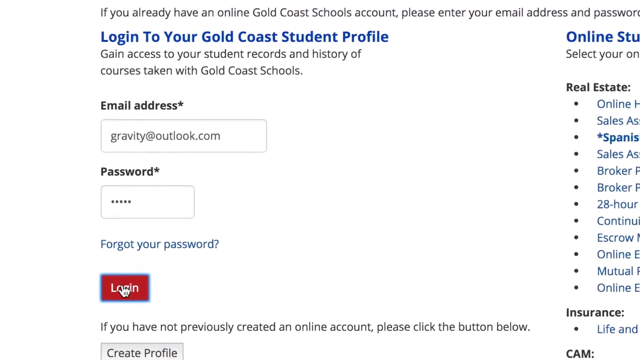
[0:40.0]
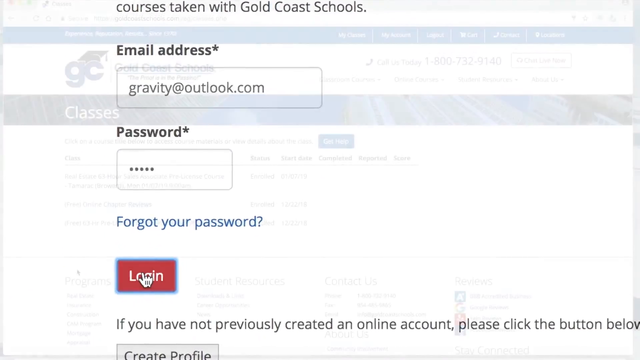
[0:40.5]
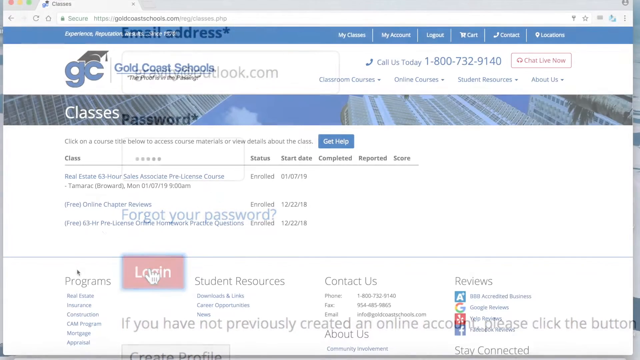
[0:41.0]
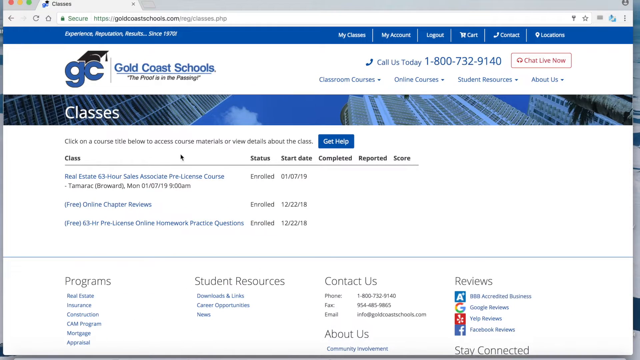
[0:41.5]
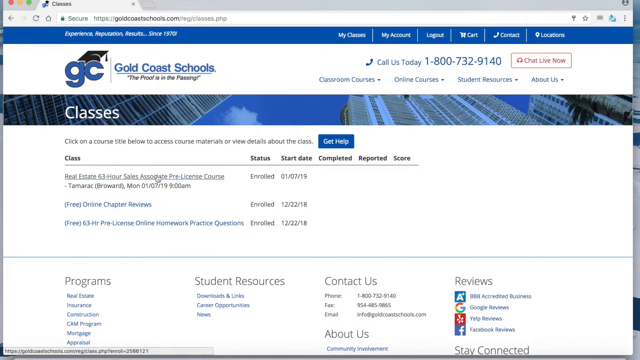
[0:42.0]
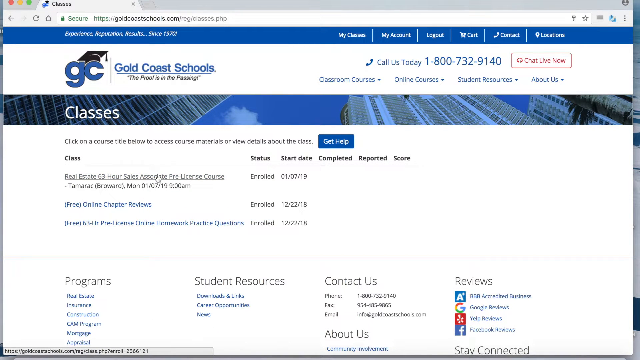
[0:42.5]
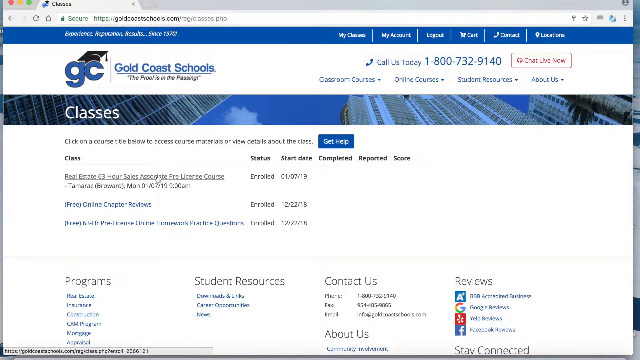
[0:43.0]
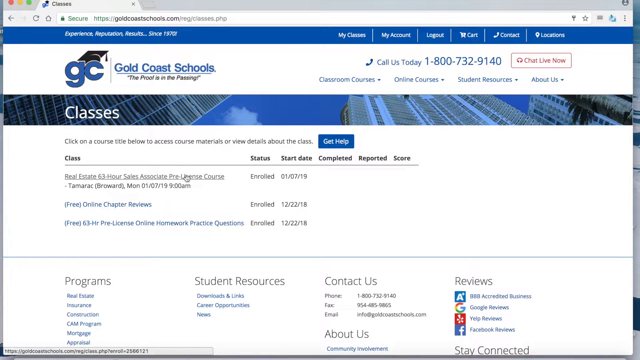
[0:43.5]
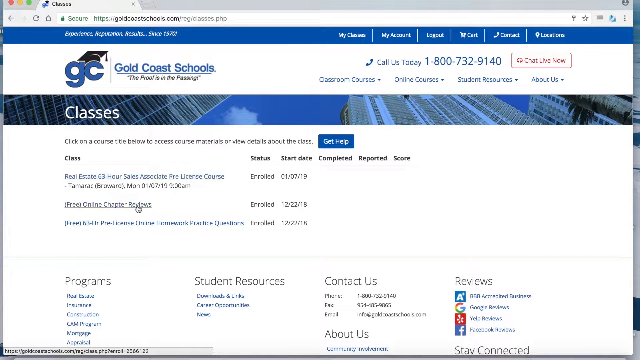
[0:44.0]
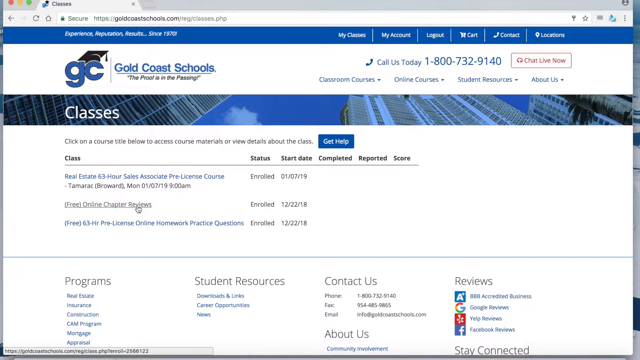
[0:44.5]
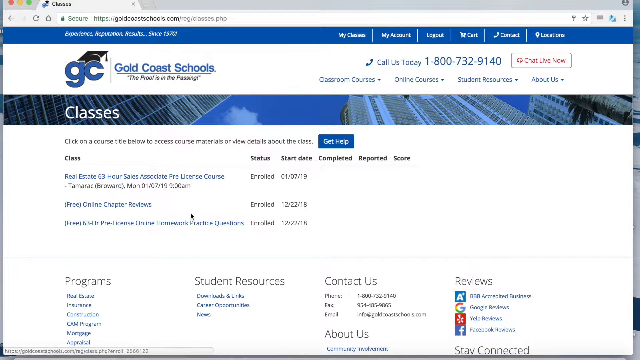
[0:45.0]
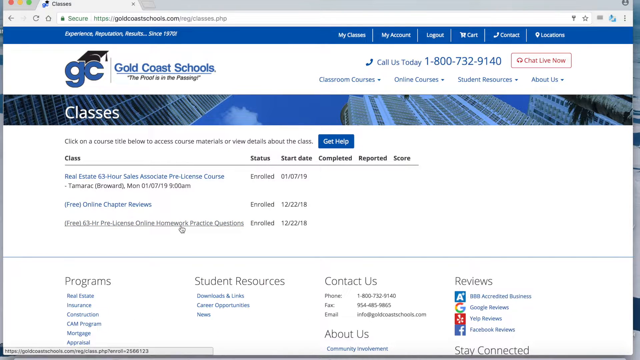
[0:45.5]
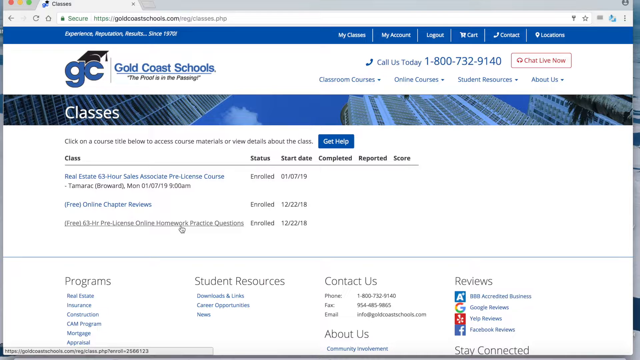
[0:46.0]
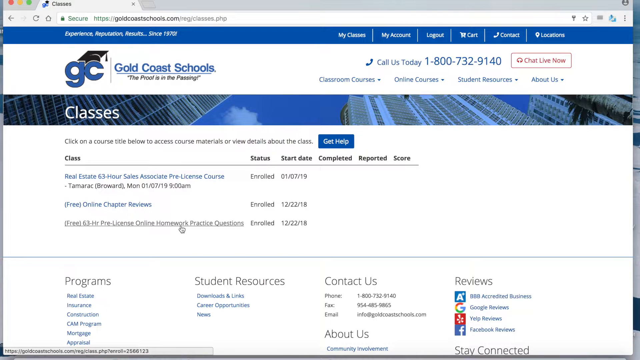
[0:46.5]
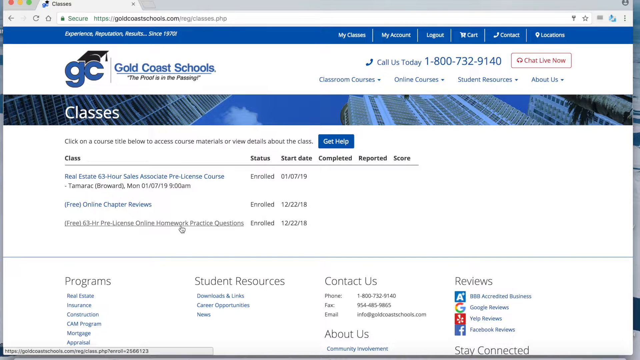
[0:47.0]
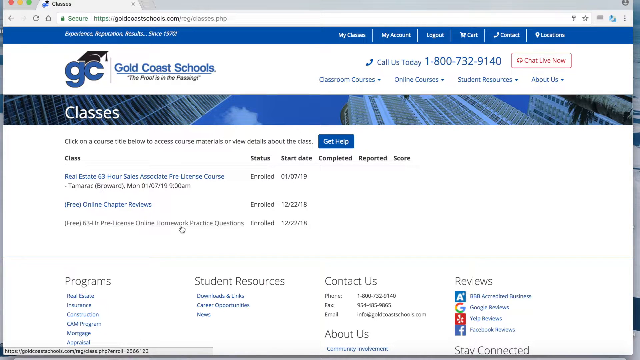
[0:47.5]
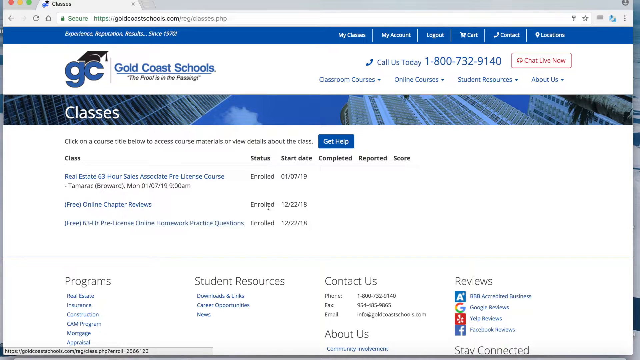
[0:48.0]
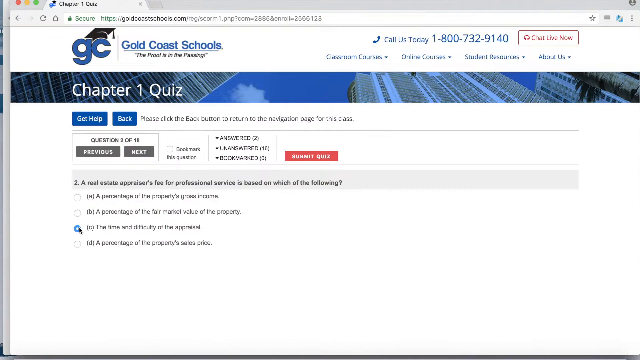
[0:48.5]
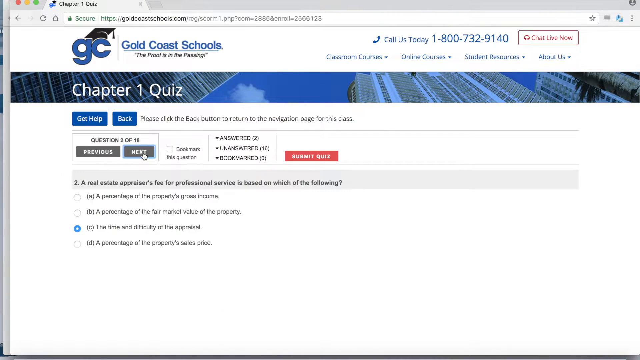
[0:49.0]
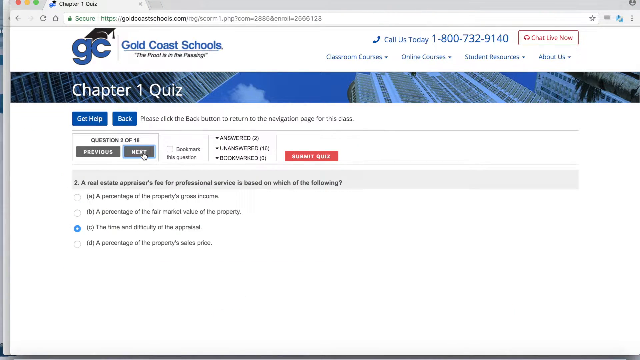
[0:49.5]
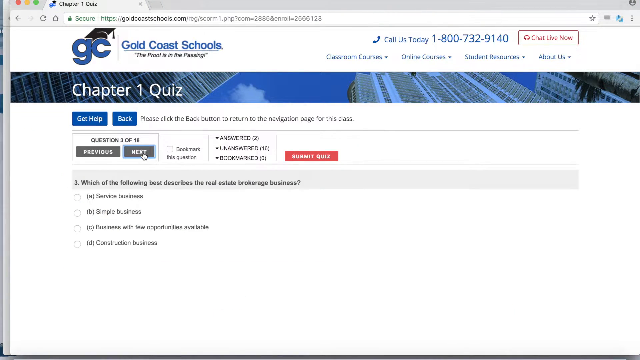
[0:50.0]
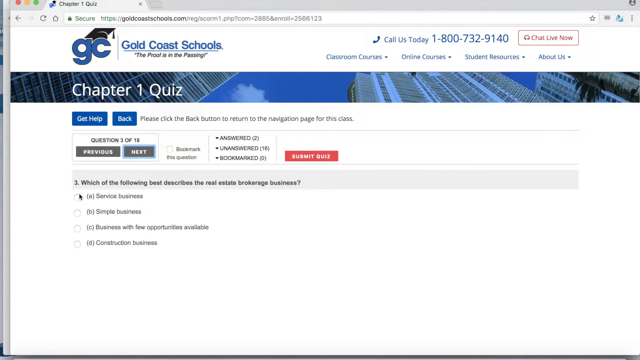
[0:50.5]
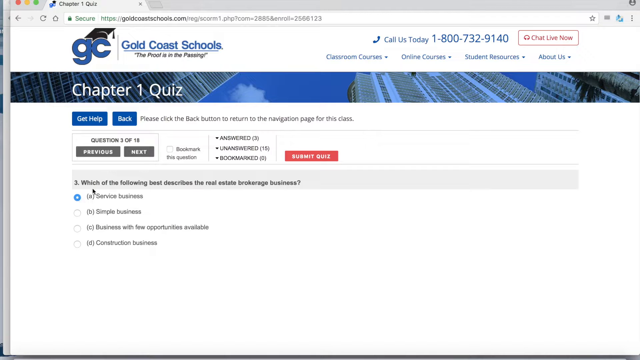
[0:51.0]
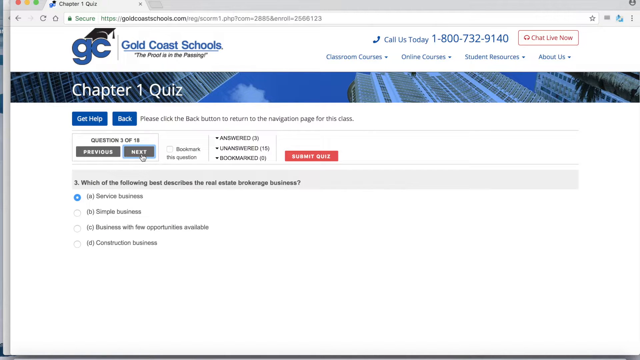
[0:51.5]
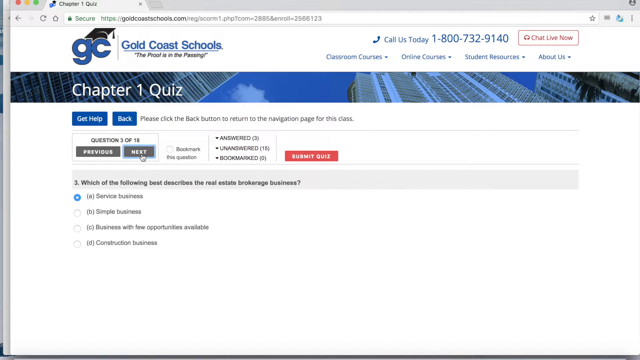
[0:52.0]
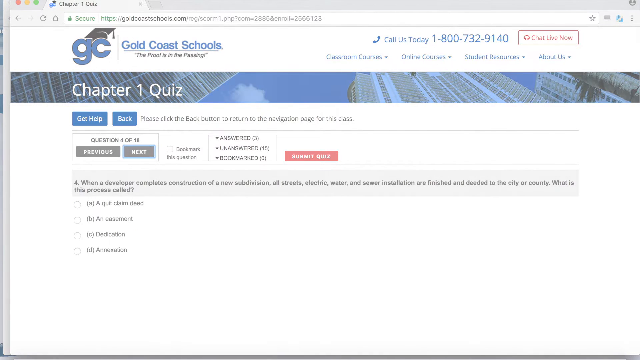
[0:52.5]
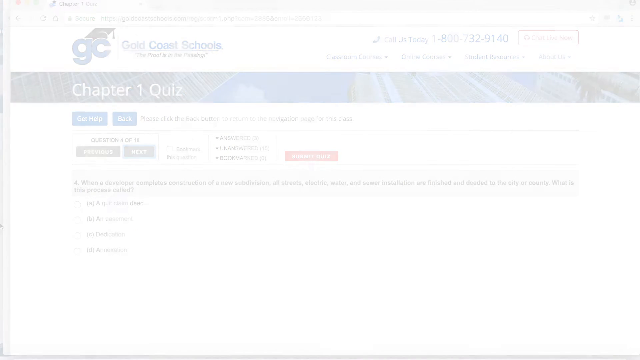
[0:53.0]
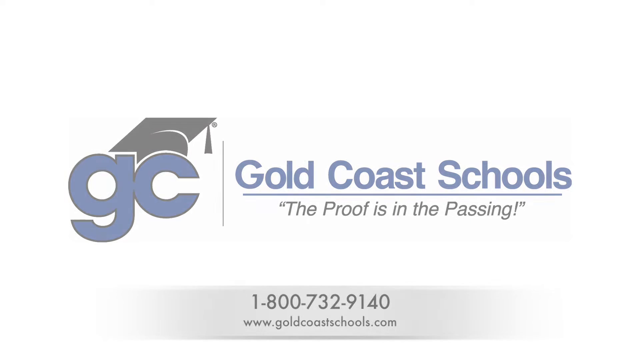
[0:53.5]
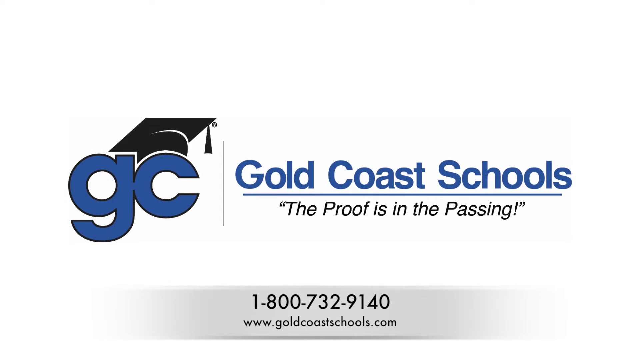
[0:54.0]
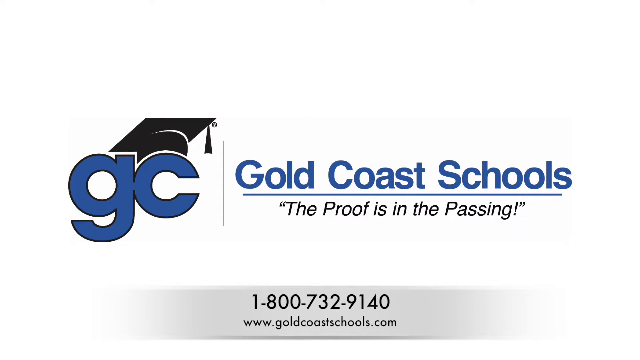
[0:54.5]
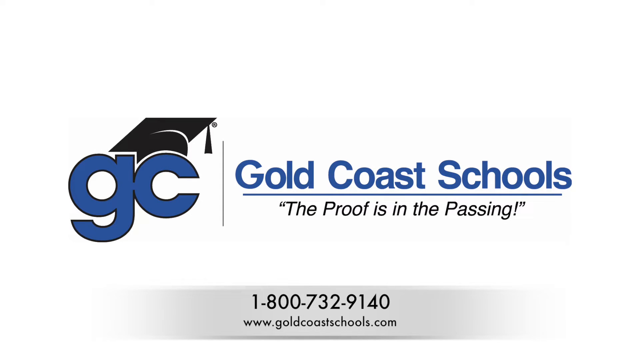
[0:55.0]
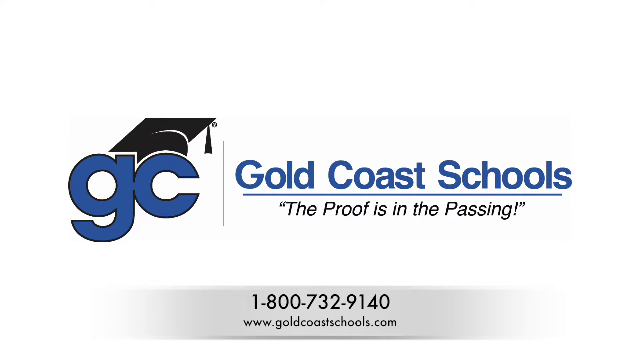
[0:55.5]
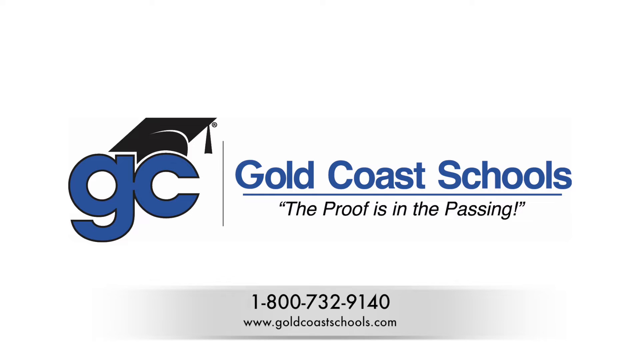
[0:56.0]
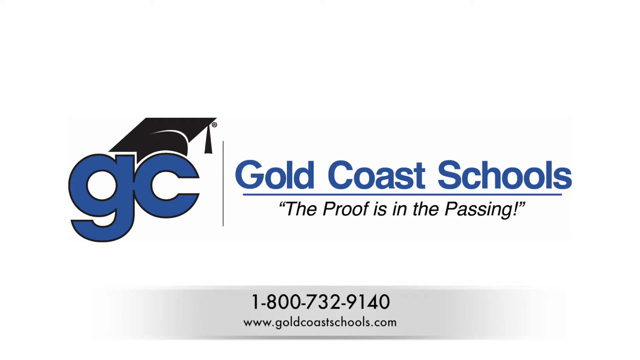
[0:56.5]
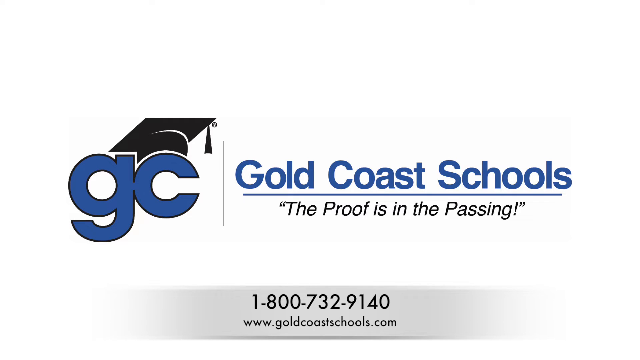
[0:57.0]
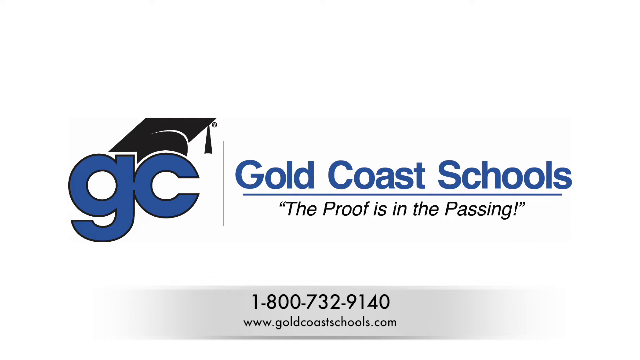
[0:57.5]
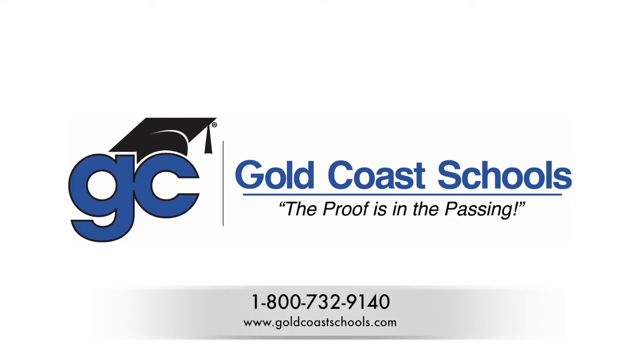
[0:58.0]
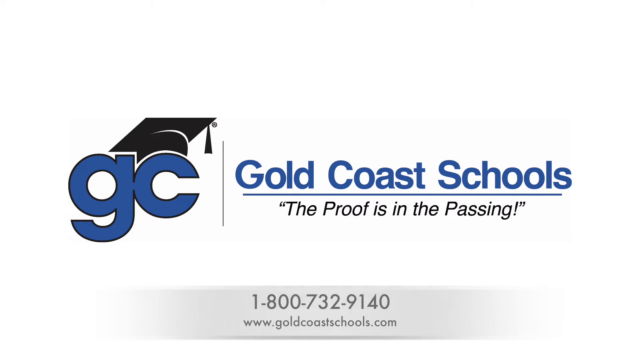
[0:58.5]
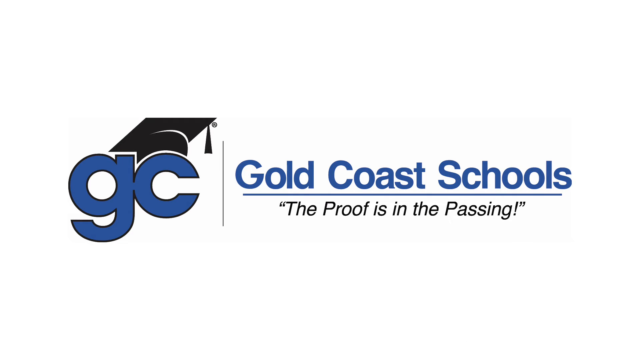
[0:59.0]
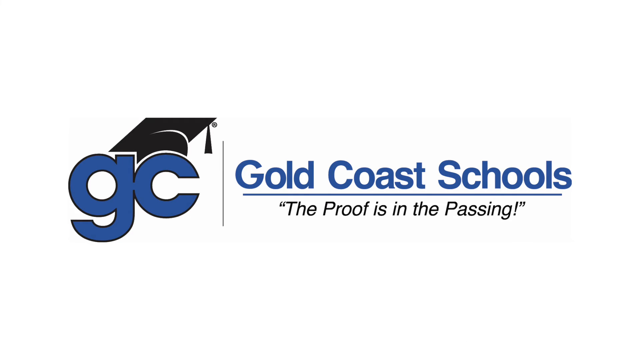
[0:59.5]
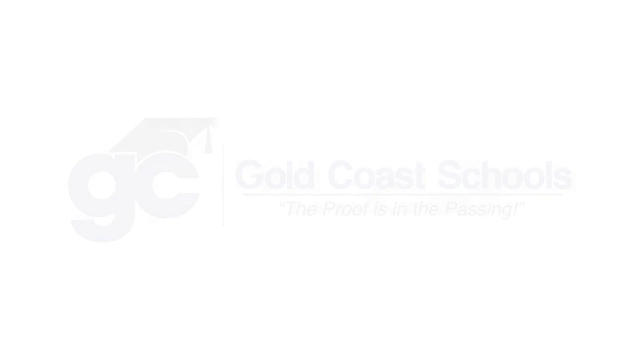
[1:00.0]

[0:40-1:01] A Gold Coast Schools web page says "classes" and then "click on a course title below to access course materials or view details about the class." Different classes are listed below, with their status and start date. The person using the page moves the cursor over to the free online chapter reviews portion and clicks on it, then moves the cursor down to the free pre-licensed online homework practice questions and clicks on that. This takes them to the chapter one quiz, where they move the cursor around and click next question. On question three, which asks "which of the following best describes the real estate brokerage business?", multiple choice answers are given. The cursor moves to A, fills it in and hits next, leading to the next question, number four.